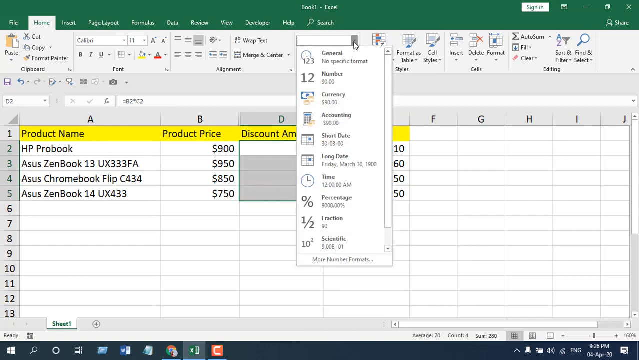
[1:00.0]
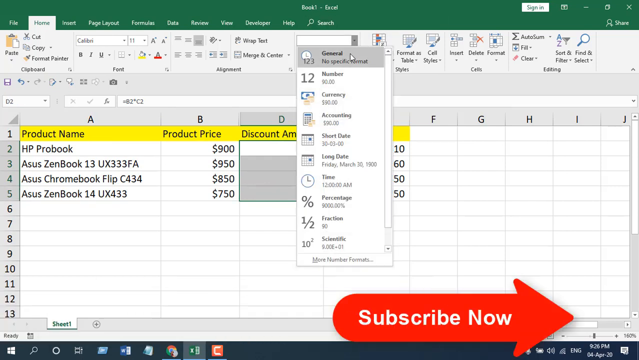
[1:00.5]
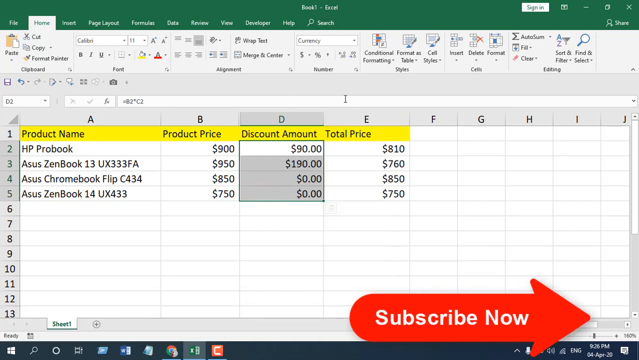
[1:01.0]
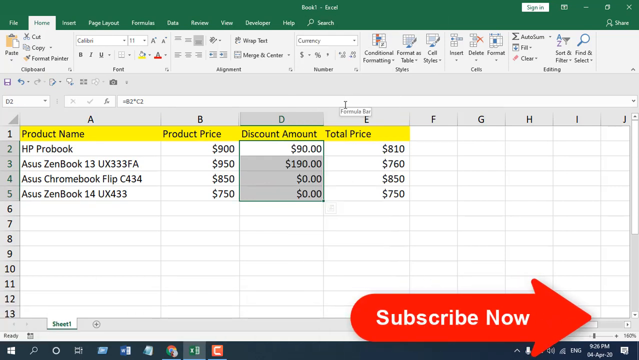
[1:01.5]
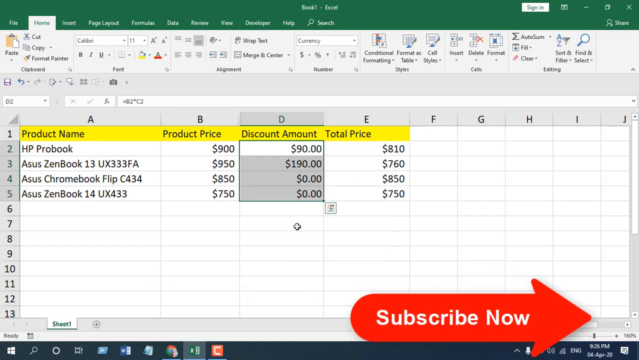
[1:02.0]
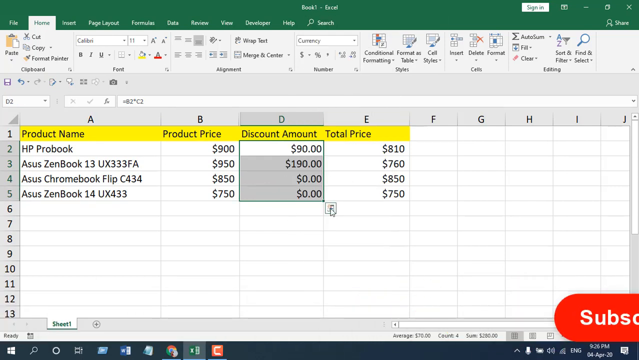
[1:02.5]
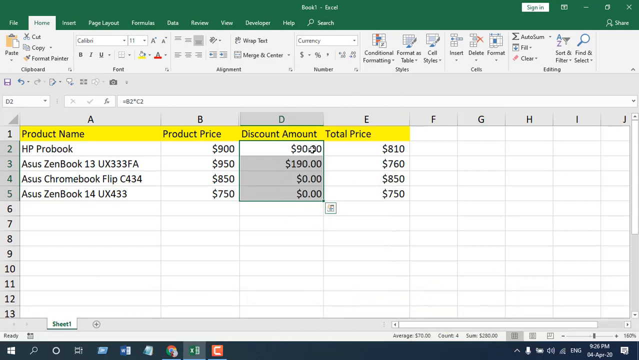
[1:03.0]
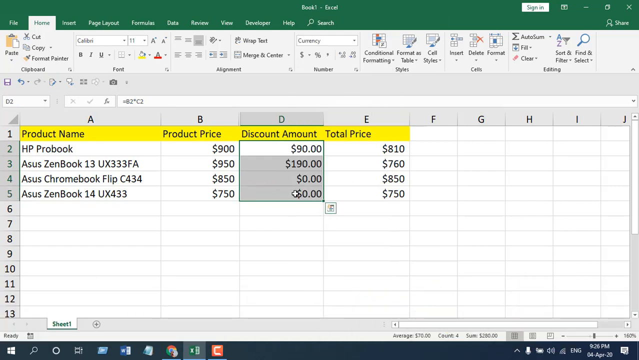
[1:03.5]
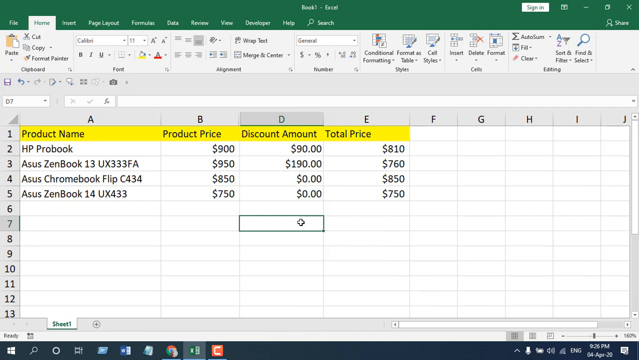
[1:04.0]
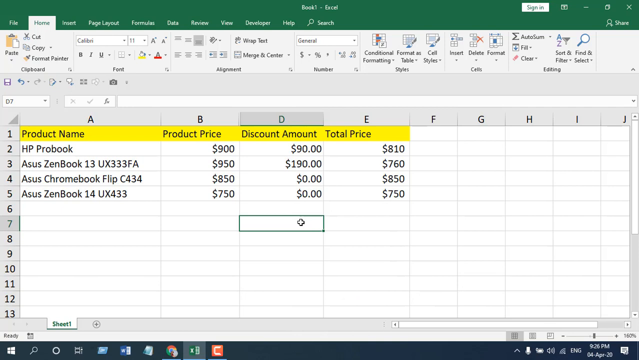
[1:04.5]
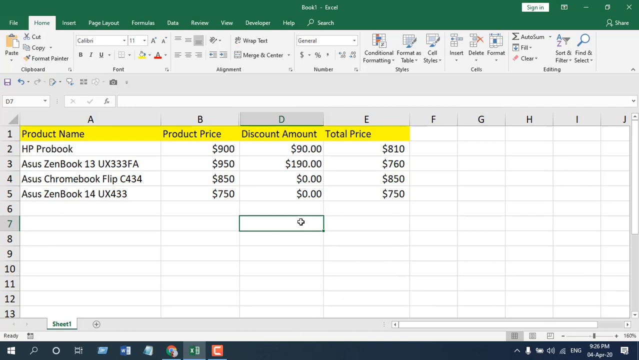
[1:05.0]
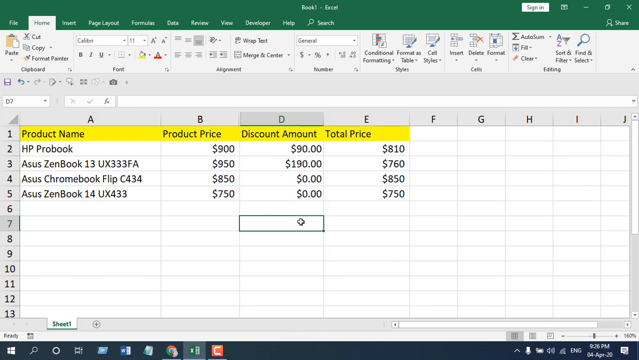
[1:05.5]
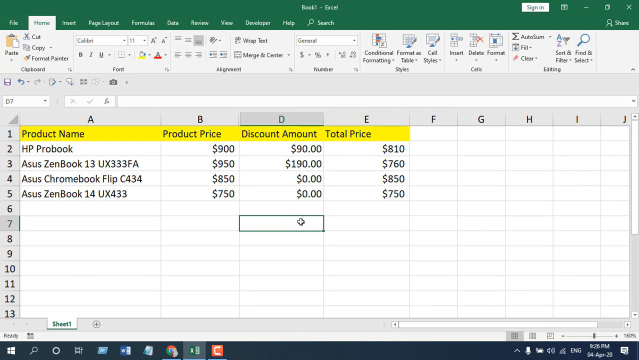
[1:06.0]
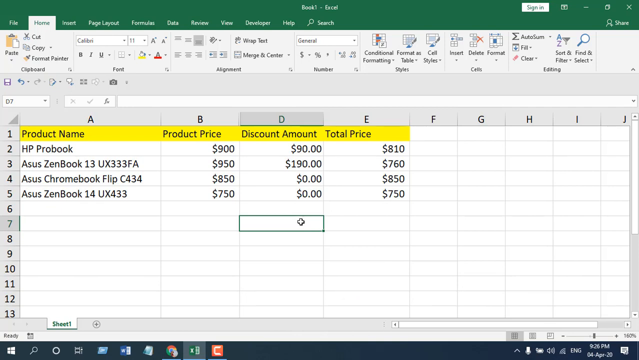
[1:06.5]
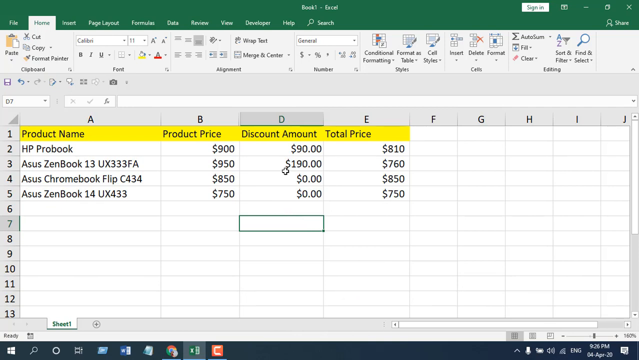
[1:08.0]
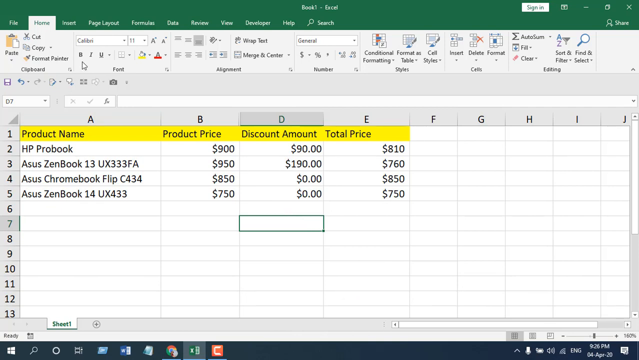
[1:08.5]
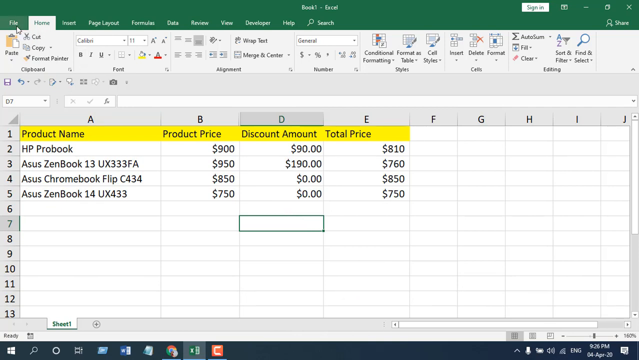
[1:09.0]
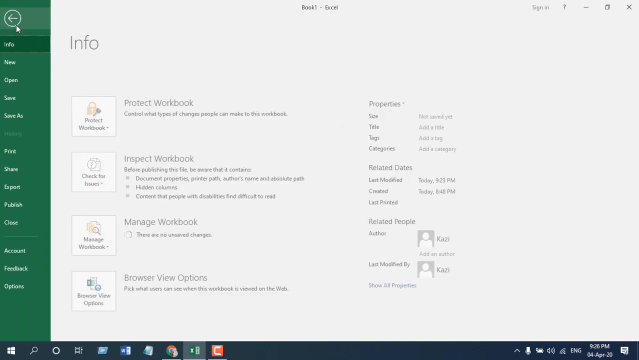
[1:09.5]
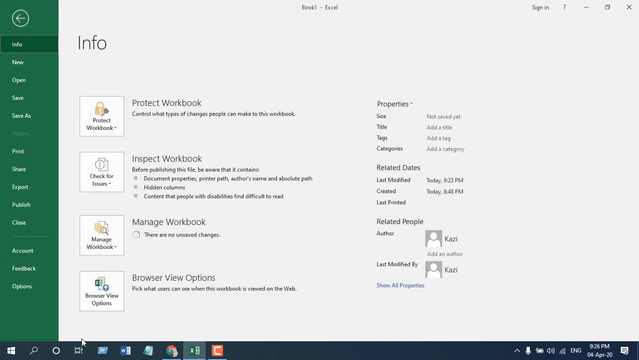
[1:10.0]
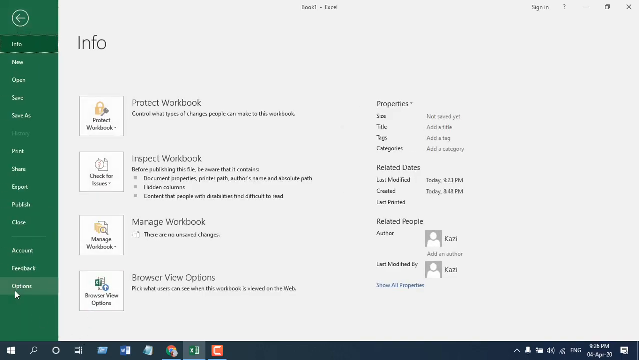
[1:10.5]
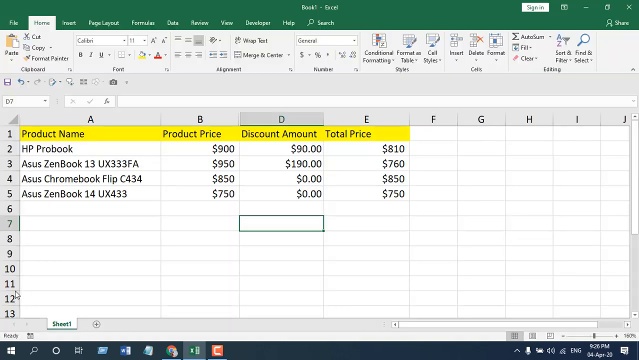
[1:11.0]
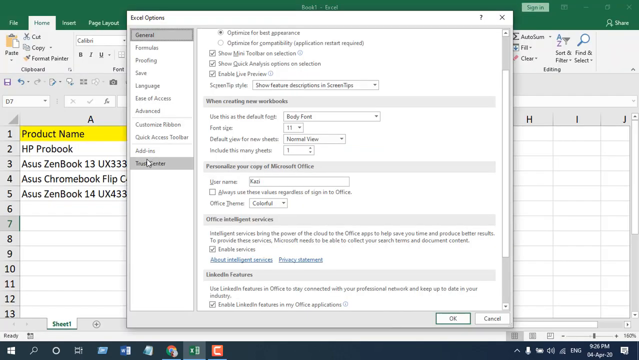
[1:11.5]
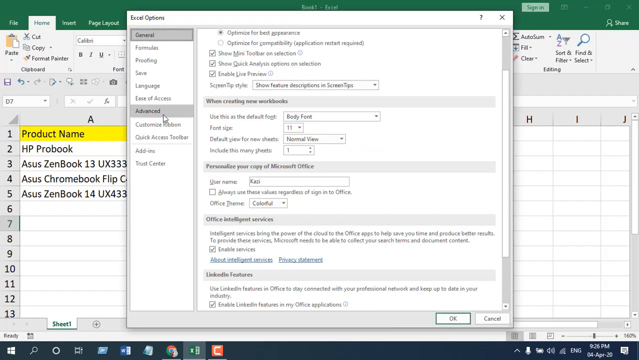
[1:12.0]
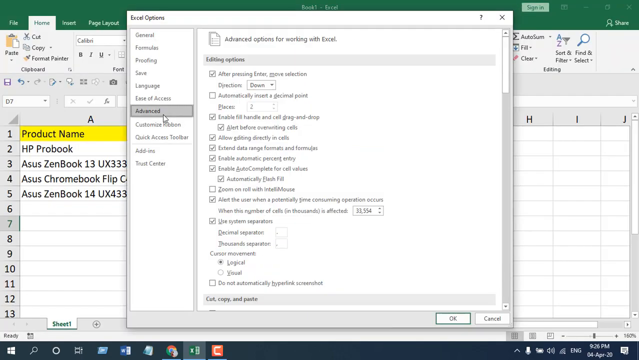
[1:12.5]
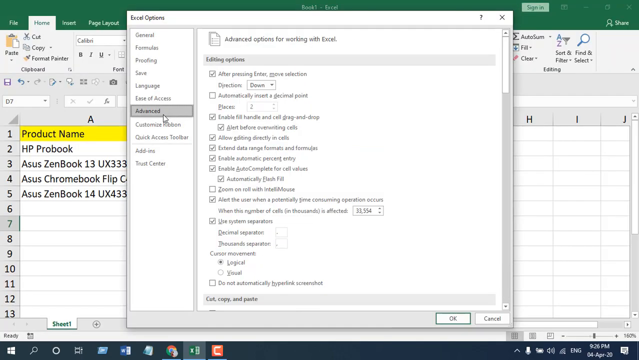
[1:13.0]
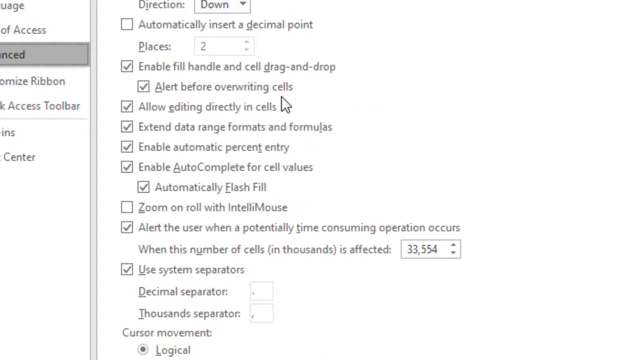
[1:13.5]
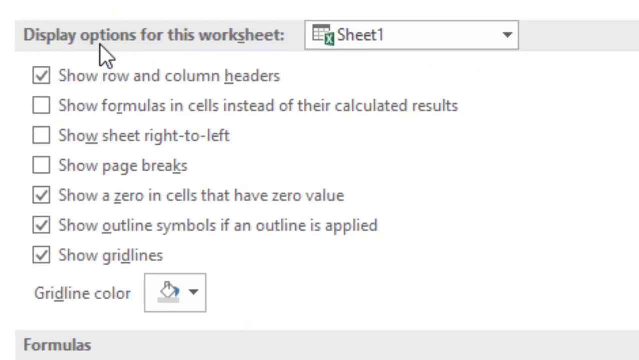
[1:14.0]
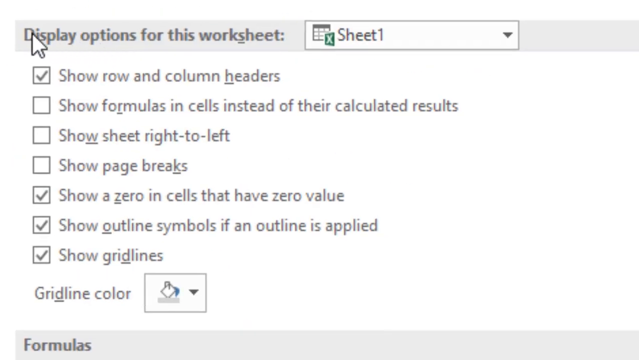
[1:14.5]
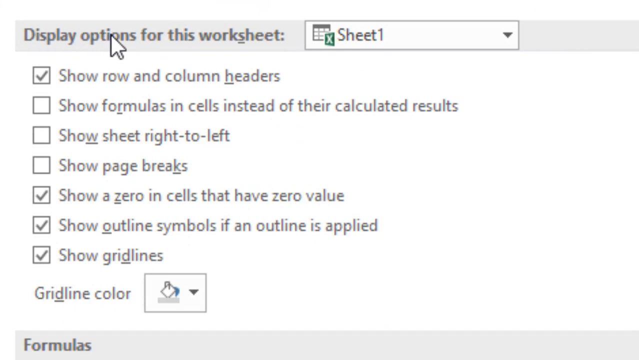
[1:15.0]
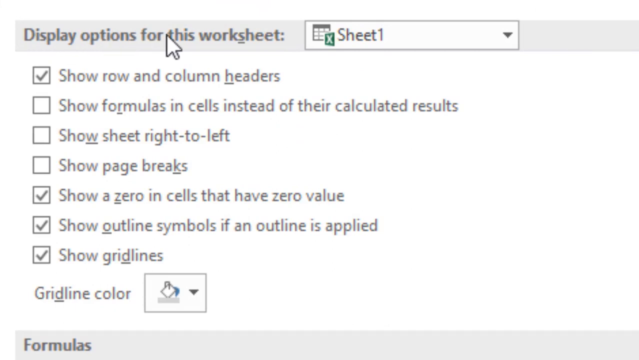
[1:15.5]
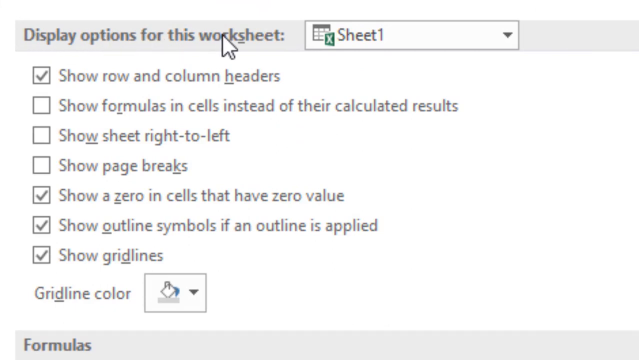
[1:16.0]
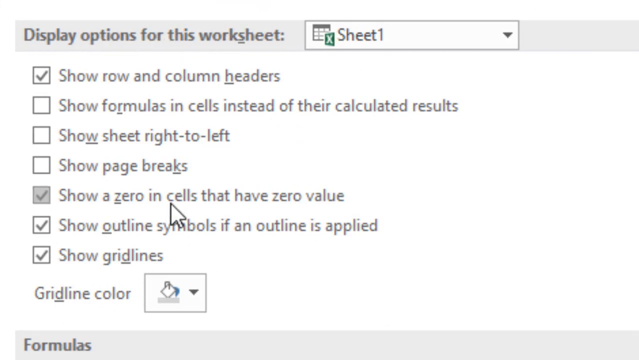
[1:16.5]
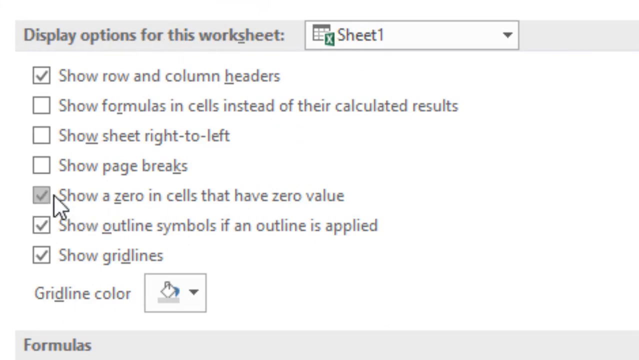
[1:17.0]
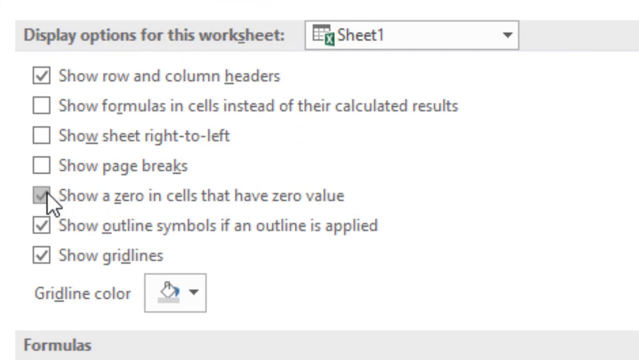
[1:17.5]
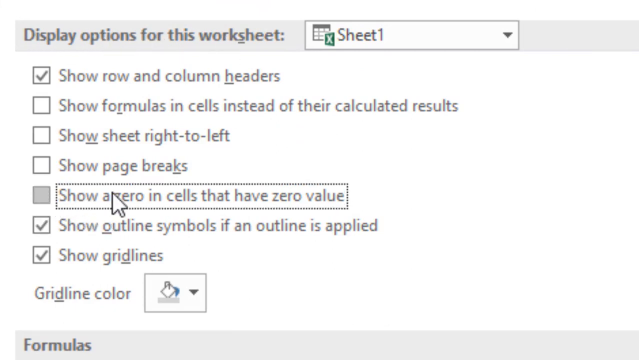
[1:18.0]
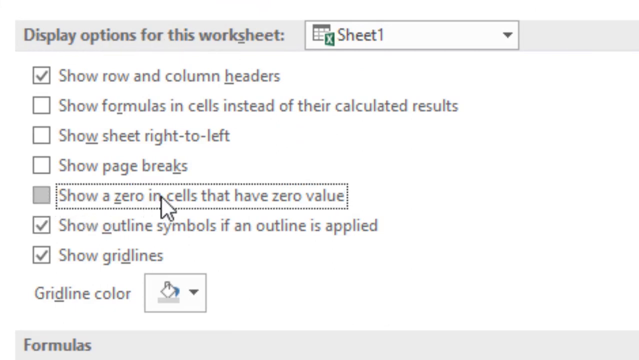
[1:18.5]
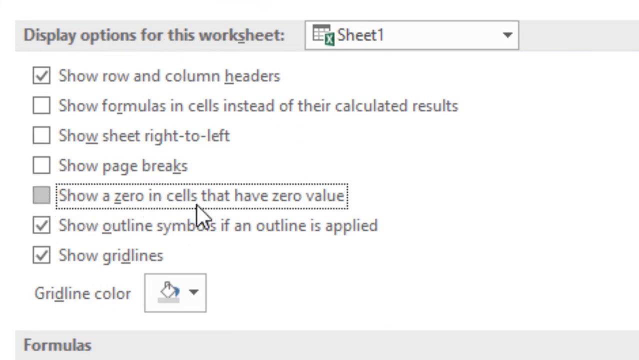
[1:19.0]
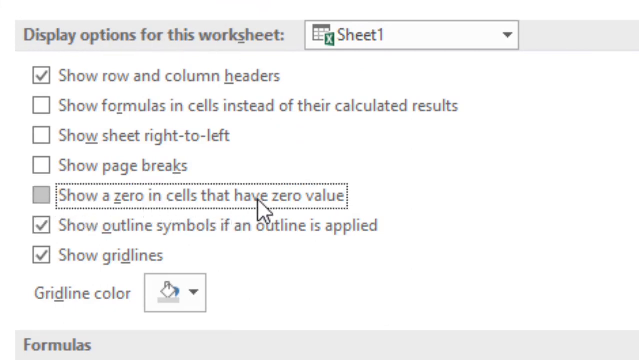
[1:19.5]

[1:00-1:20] The Excel spreadsheet shows four products with their prices, discount amounts and total prices. The HP ProBook is priced at $900 with a $90 discount and a total price of $810. The Asus ZenBook 13 UX333FA is priced at $950 with a $190 discount, for a total of $760. The Asus Chromebook Flip C434 is priced at $850 with a discount amount of $0, so its total price stays at $850. The Asus ZenBook 14 UX433 has a product price of $750 and a discount amount of $0, making its total price $750. A red arrow with the words "Subscribe Now" is at the bottom of the screen, and the Discount Amount column is highlighted. The user moves the mouse cursor around the column, then unhighlights it by clicking off of it. They click the File option at the top left of Excel, which opens a menu, scroll down and click Options, opening the Excel Options menu. They go up to Advanced and click it, and the video zooms in to a section of the advanced options labeled "Display Options for this Worksheet." There, a checked checkbox shows the option "show a zero in cells that have a zero value," and the user unchecks it.